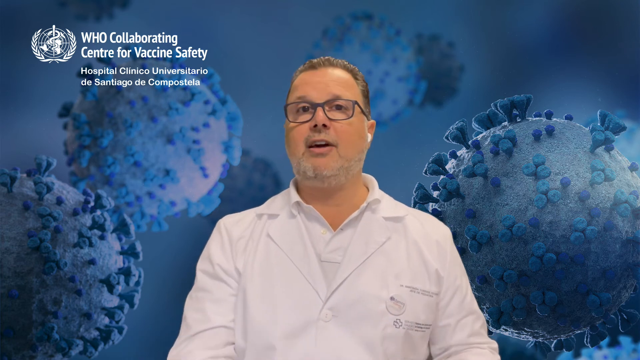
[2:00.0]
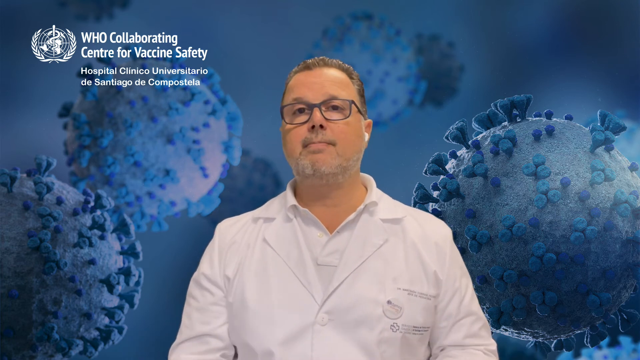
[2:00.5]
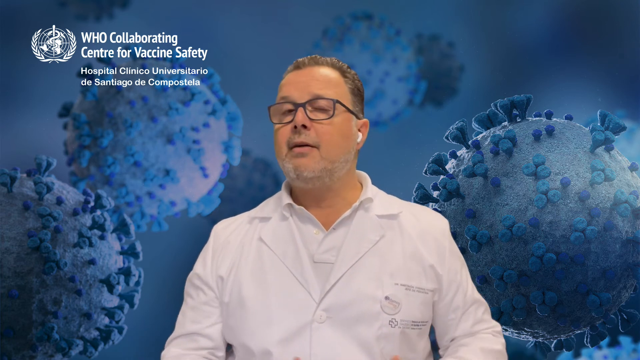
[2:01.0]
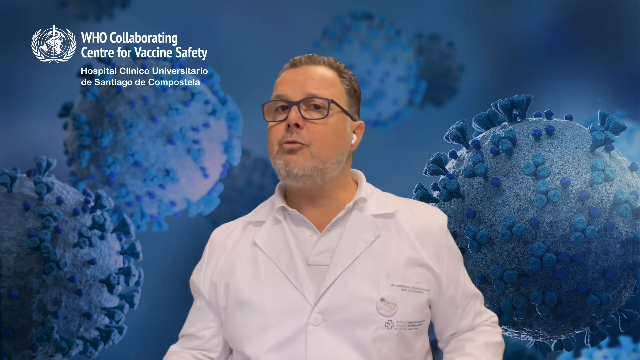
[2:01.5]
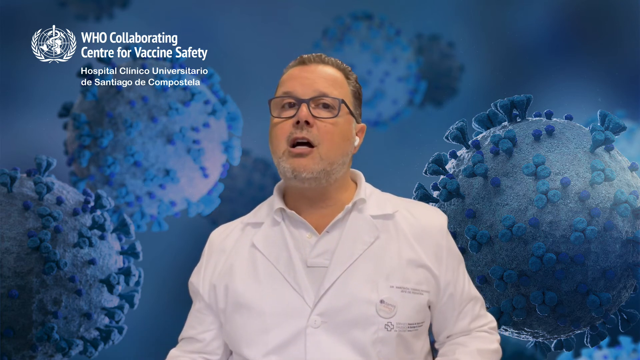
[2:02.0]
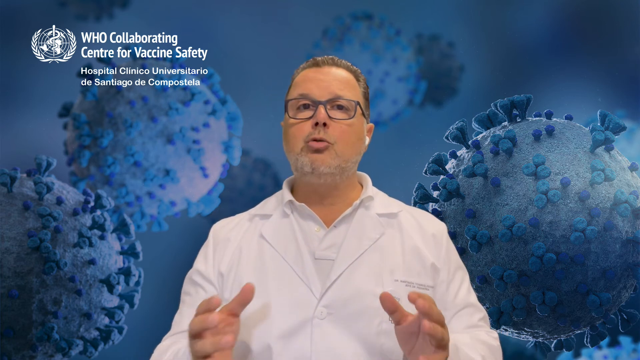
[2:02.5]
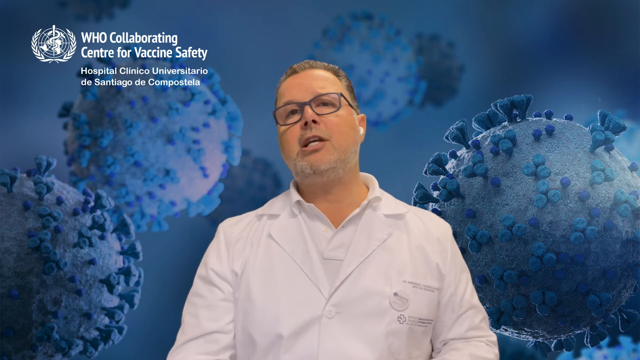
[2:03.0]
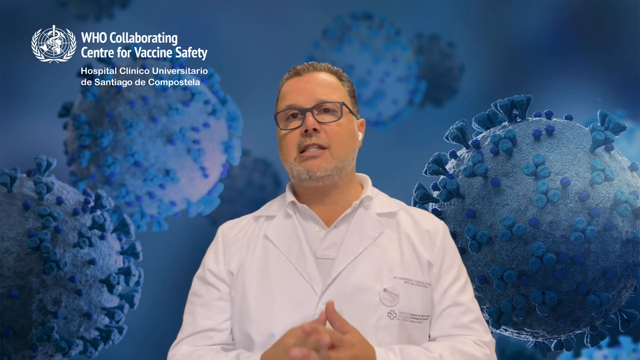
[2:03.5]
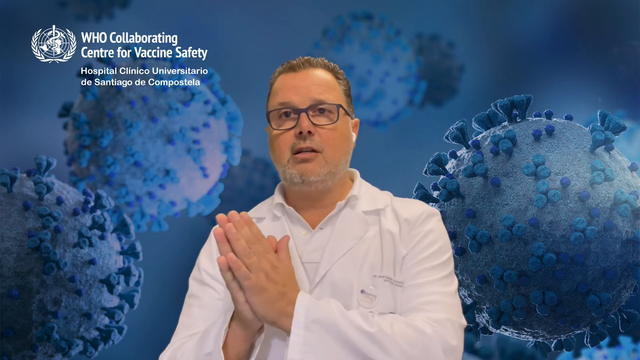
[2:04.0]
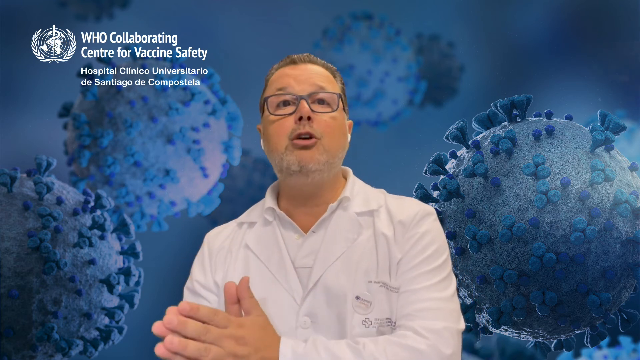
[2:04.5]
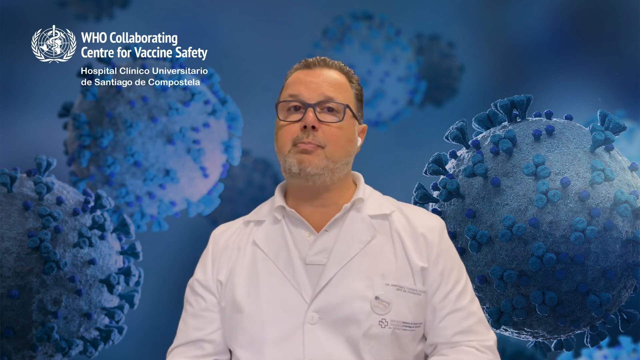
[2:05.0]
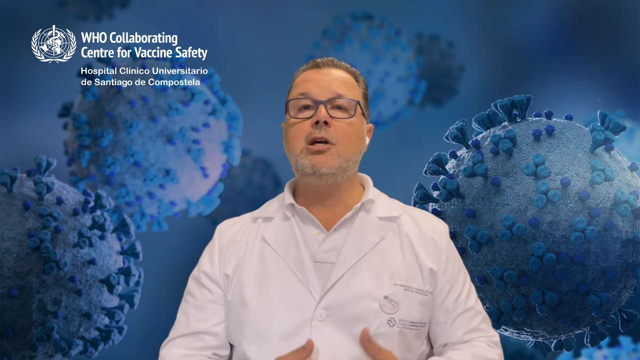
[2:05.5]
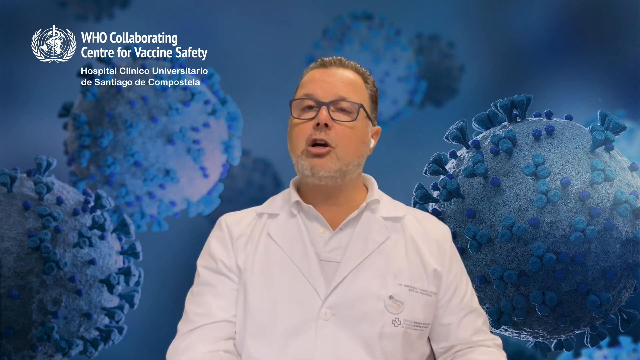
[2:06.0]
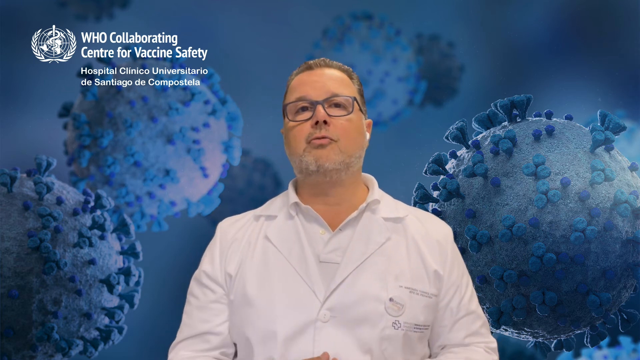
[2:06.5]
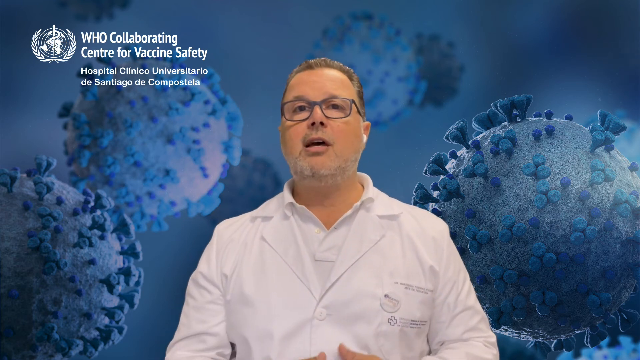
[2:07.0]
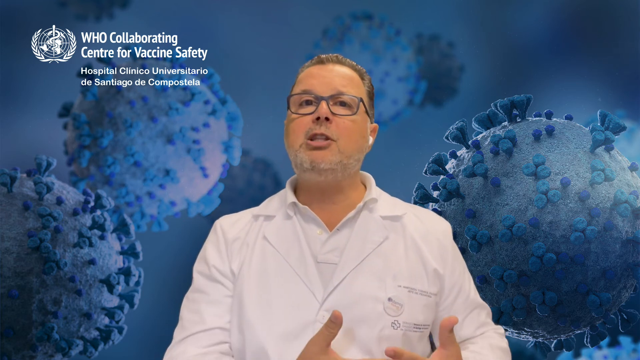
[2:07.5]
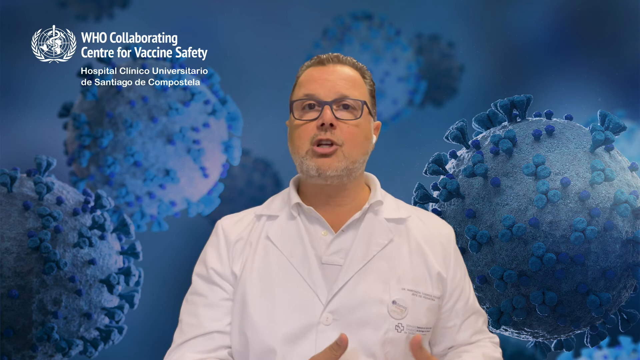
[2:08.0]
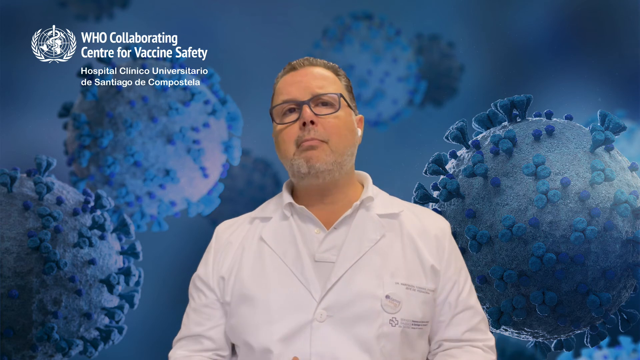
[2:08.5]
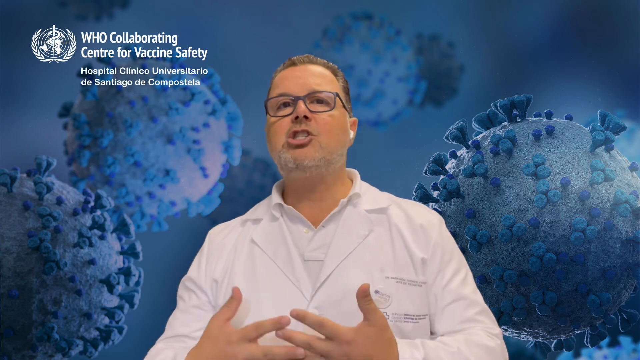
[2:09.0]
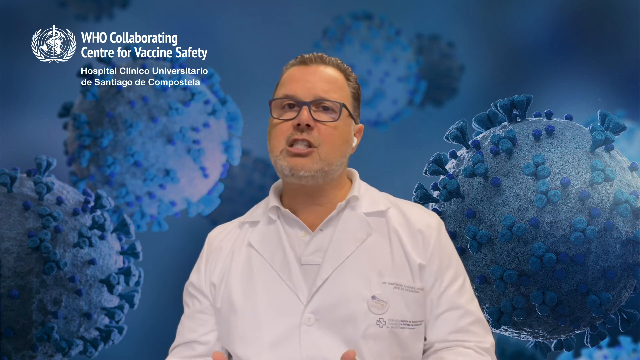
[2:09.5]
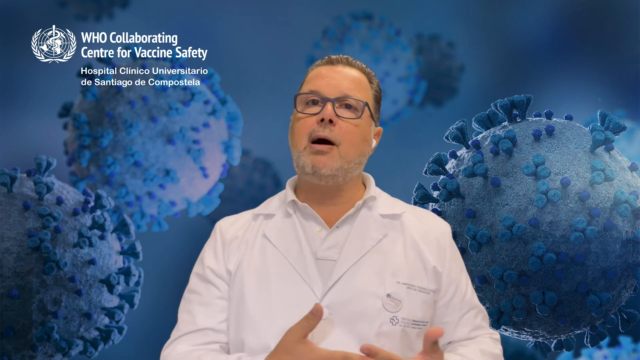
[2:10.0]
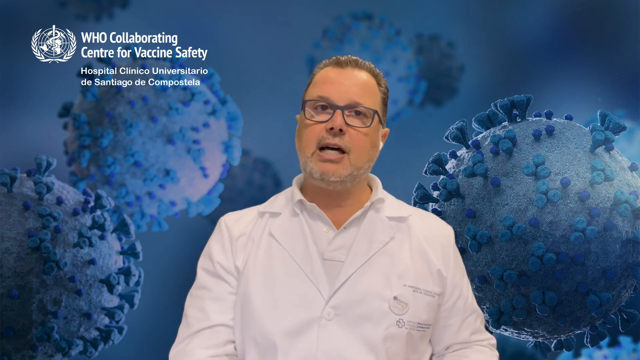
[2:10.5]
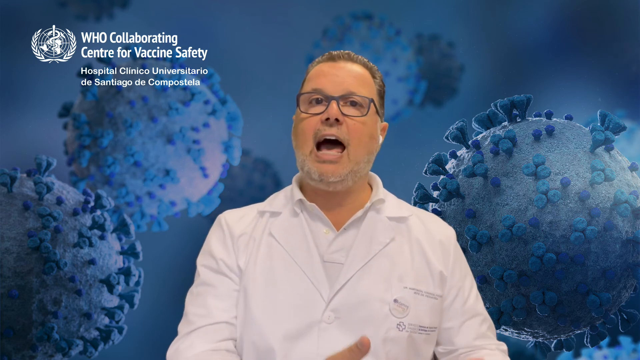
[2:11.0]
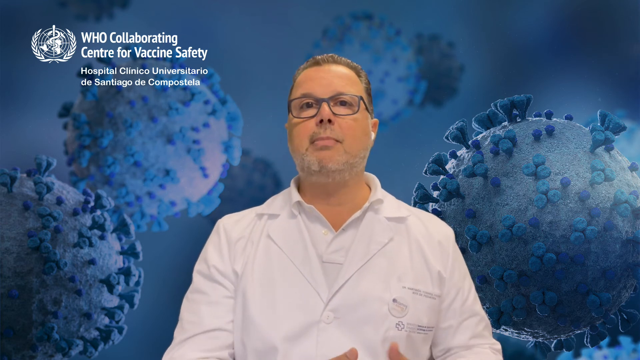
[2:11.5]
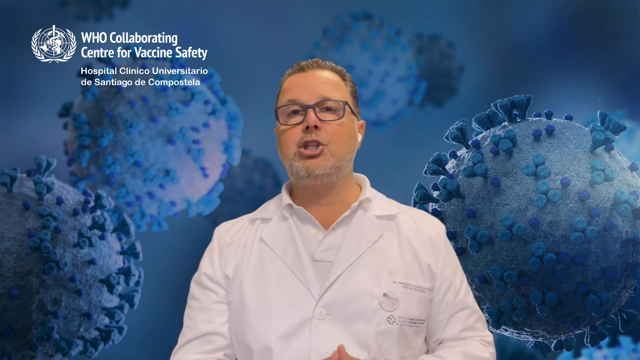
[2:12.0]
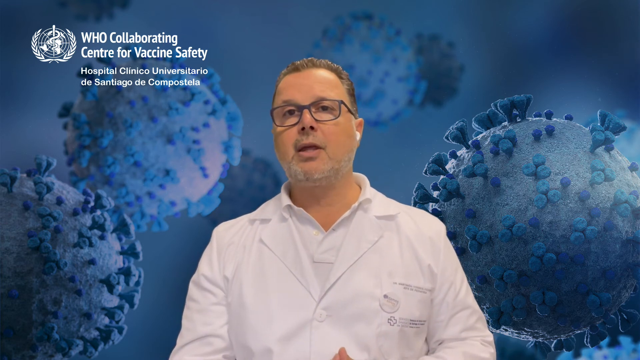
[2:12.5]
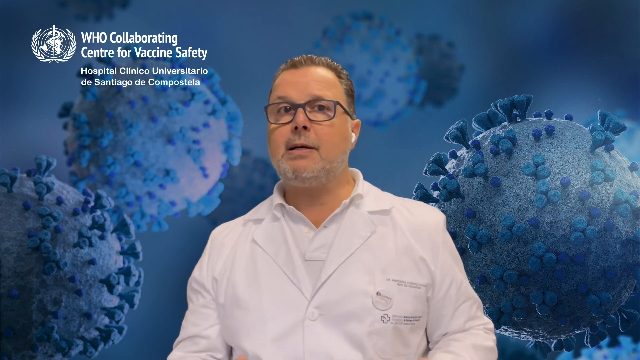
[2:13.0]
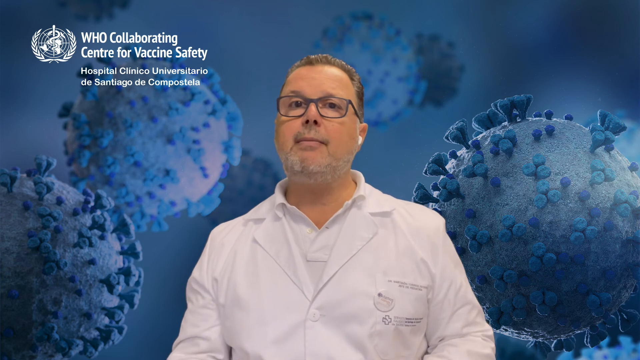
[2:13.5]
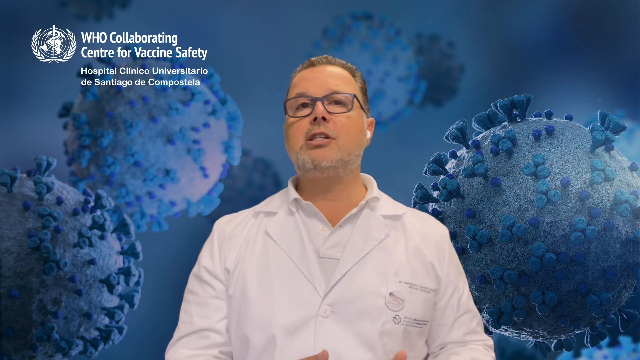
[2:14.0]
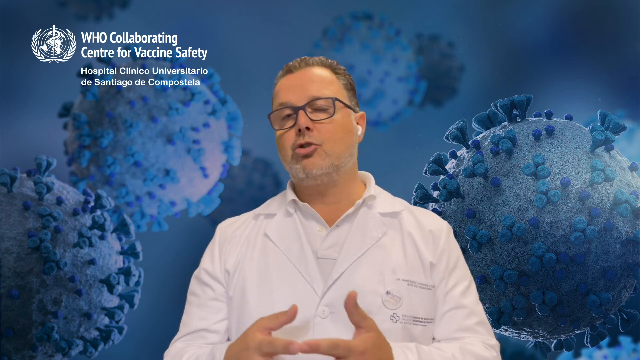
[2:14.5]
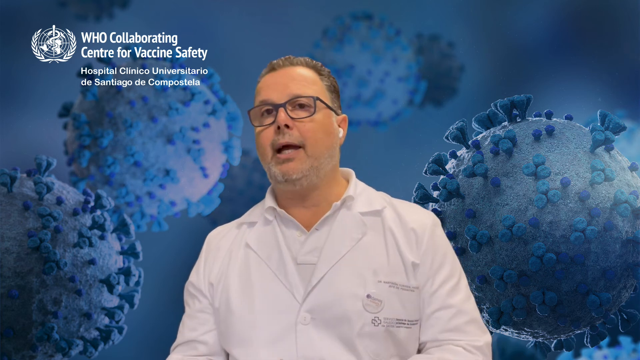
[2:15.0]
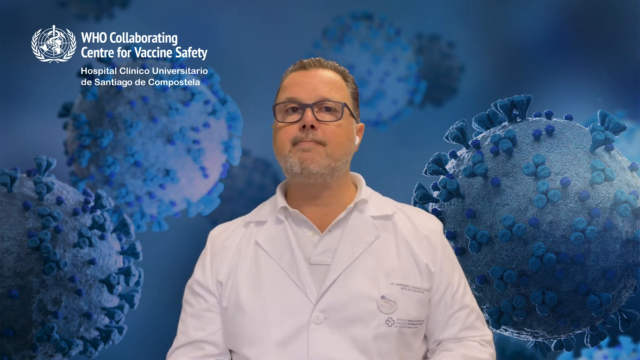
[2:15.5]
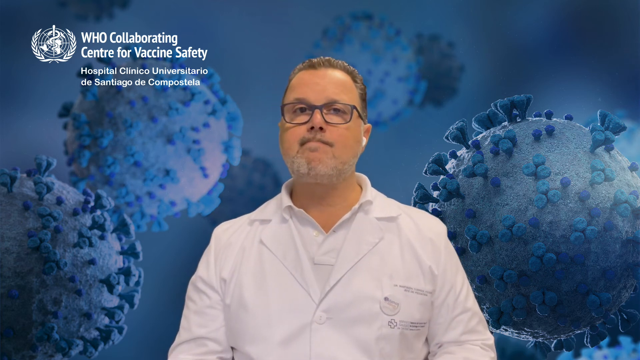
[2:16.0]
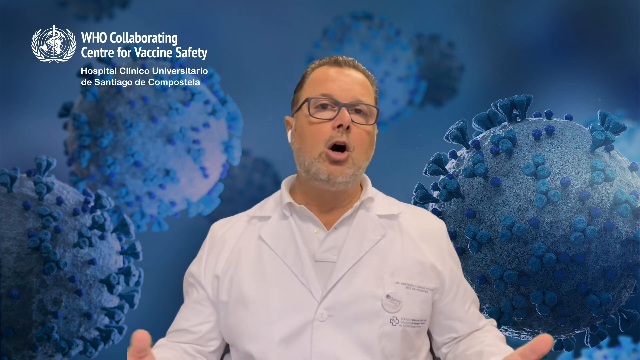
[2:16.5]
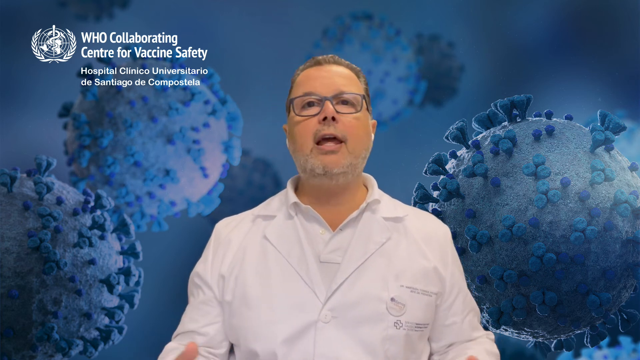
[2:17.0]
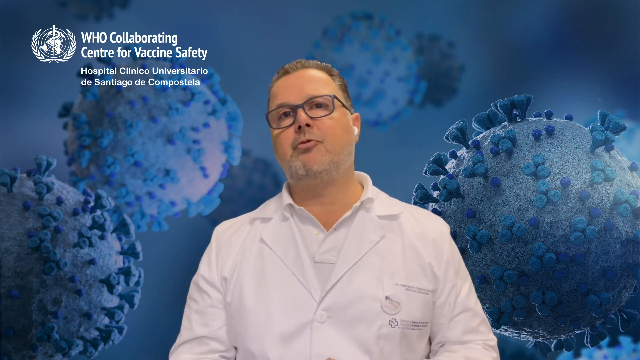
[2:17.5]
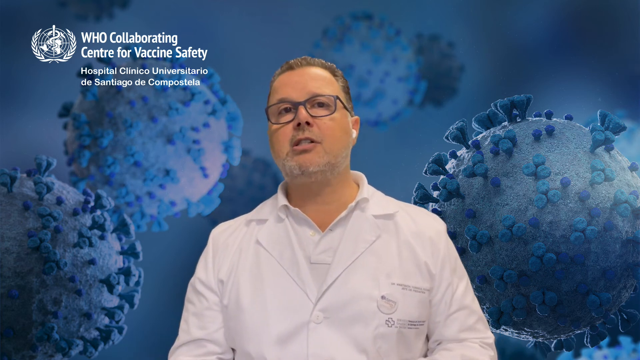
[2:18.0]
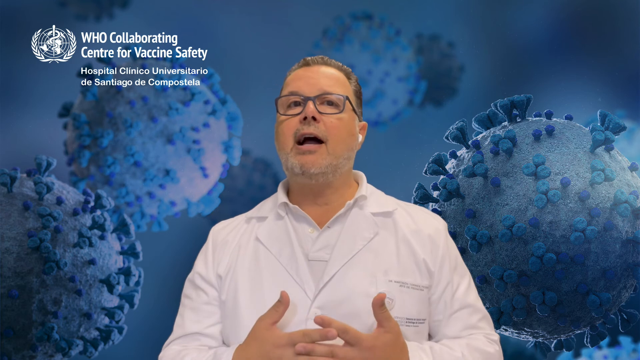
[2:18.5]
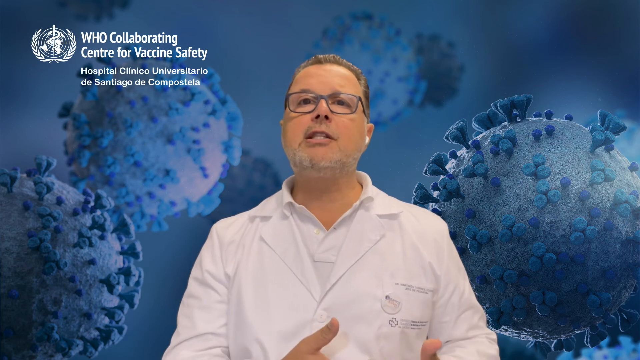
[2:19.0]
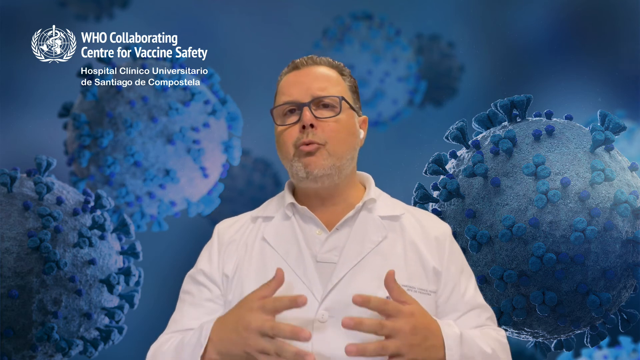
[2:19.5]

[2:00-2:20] The background is a blurry blue, with eight spherical objects spread throughout that are supposed to be viruses; they have little blue spindles on them. In the upper left is a white symbol, with the white text "WHO Collaborating Center for Vaccine Safety" to its right and, beneath that in smaller white text, "Hospital Clinico Universitario de Santiago de Compostela". In the center is a man in a white lab coat, white shirt and black glasses, with two white earpieces, one in each ear, facing the viewer. He continues to speak as he faces the viewer, moving his arms and hands together from his right side to the center of his body. At one point he moves his hands behind him in a shrugging gesture before bringing them in front of his body again, together, touching at the fingers.